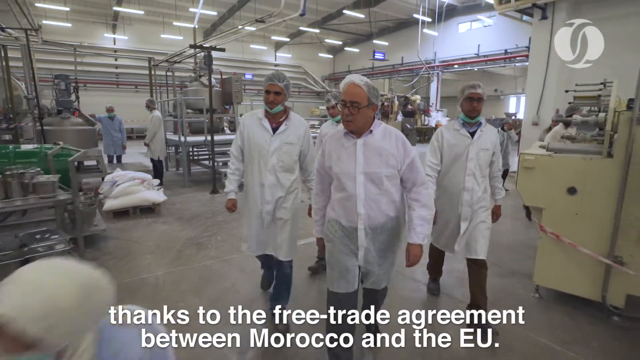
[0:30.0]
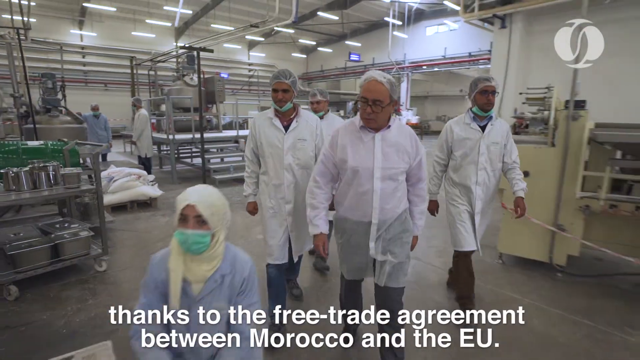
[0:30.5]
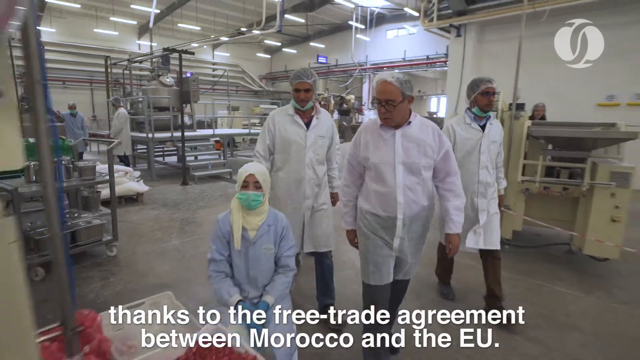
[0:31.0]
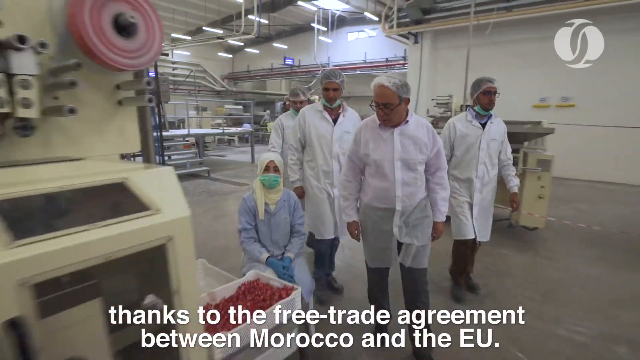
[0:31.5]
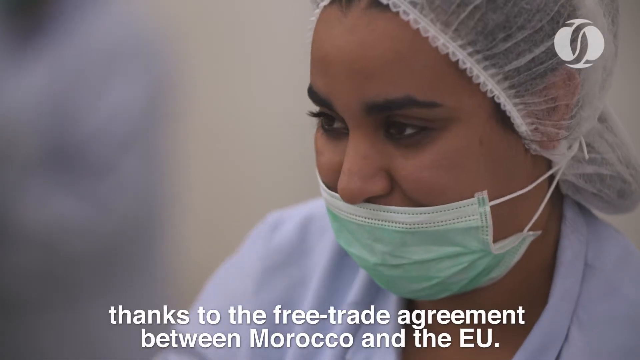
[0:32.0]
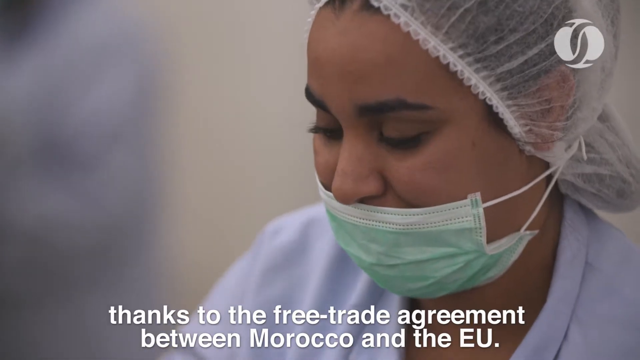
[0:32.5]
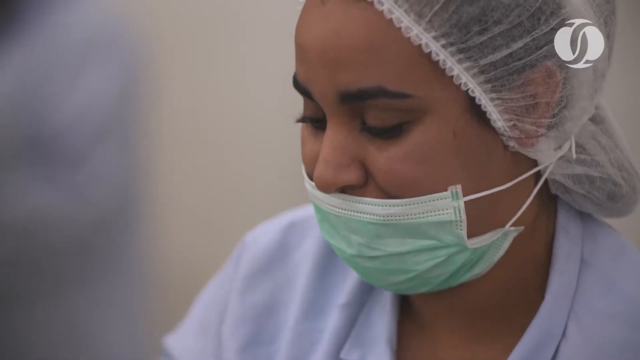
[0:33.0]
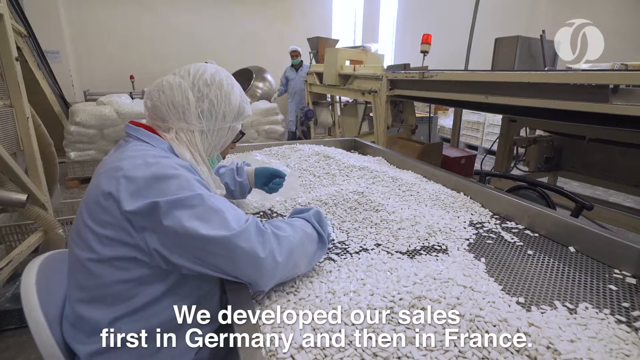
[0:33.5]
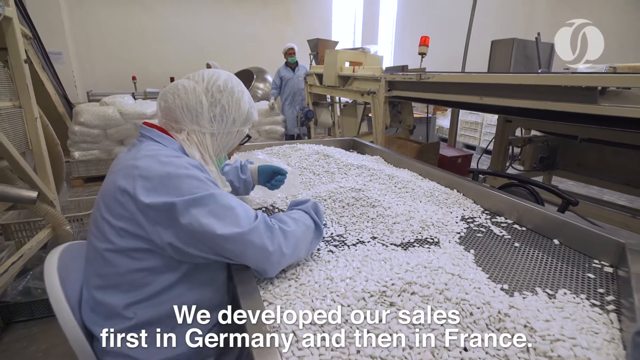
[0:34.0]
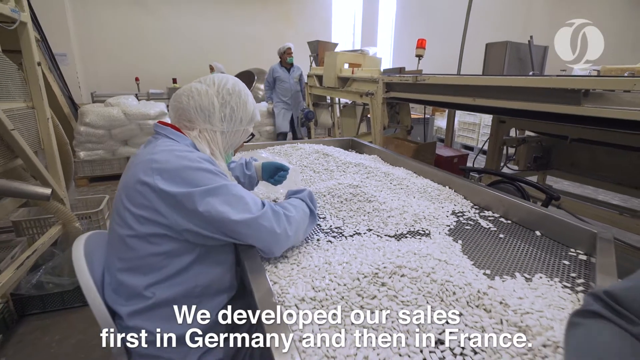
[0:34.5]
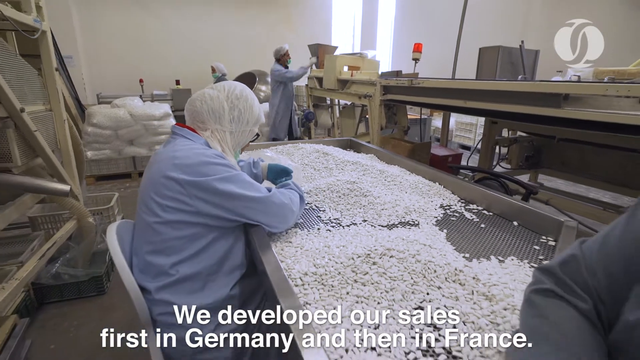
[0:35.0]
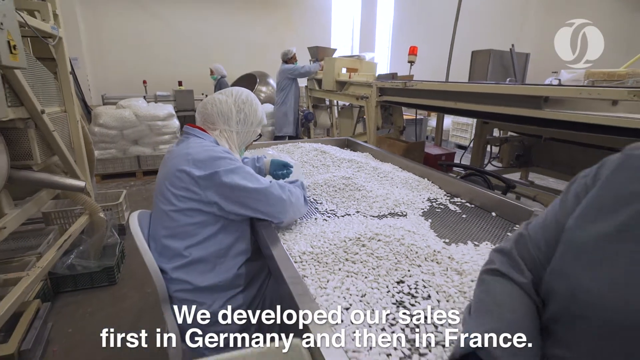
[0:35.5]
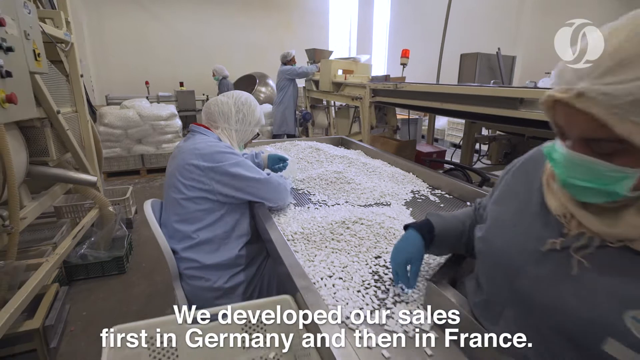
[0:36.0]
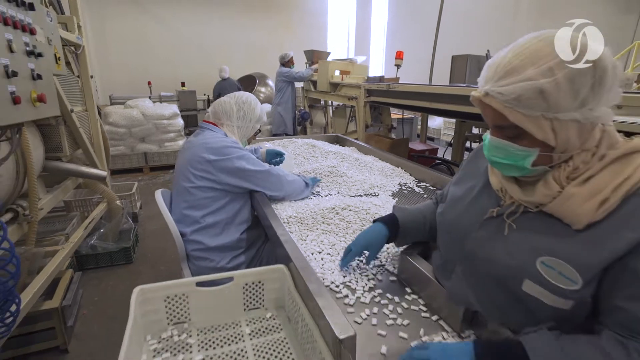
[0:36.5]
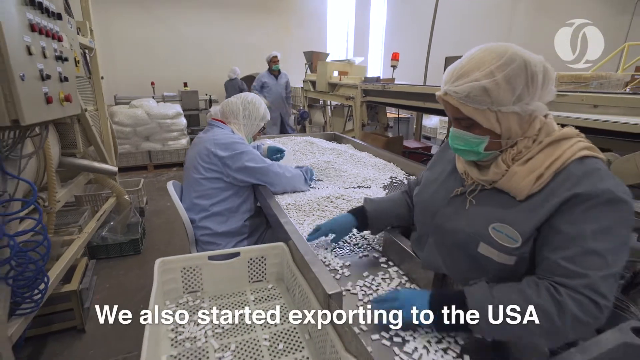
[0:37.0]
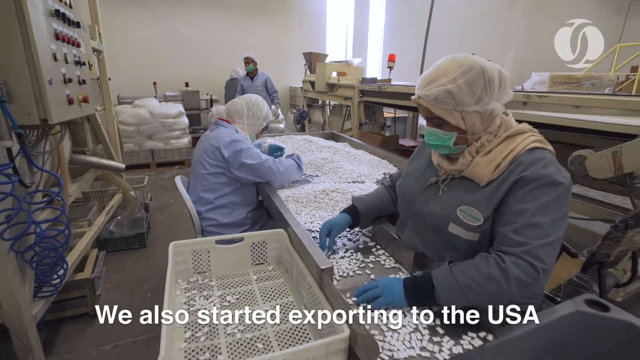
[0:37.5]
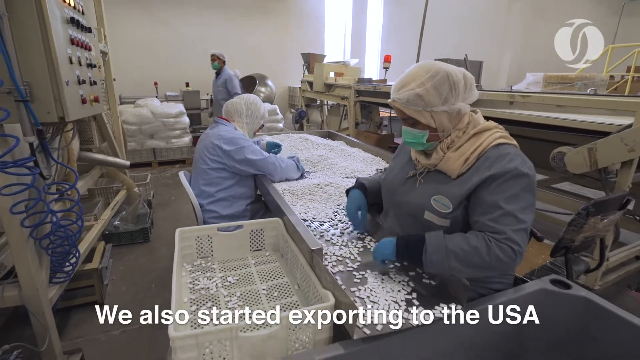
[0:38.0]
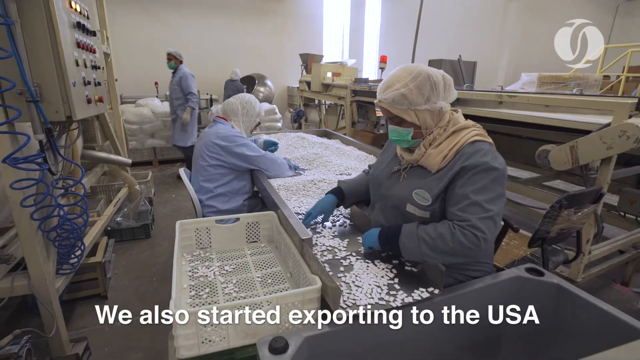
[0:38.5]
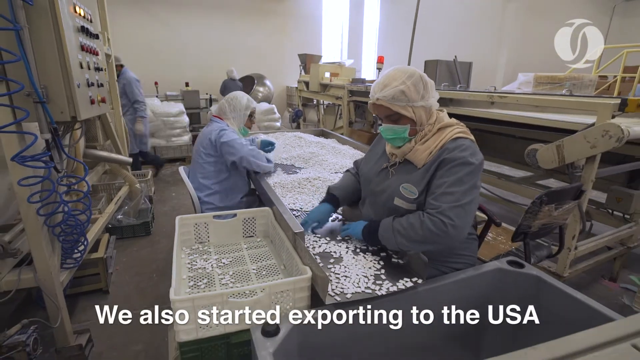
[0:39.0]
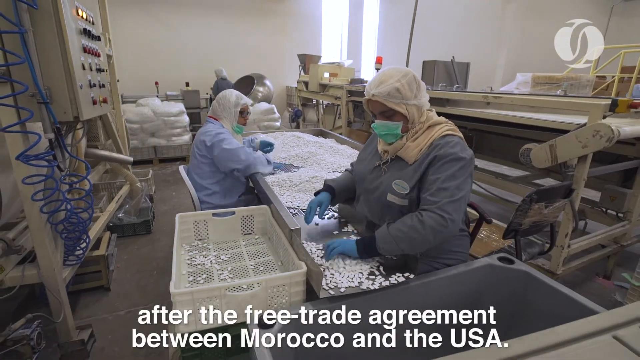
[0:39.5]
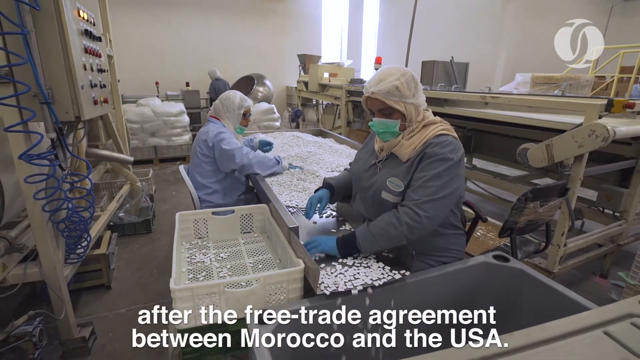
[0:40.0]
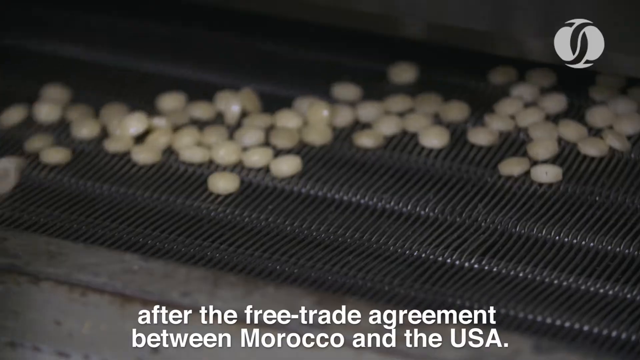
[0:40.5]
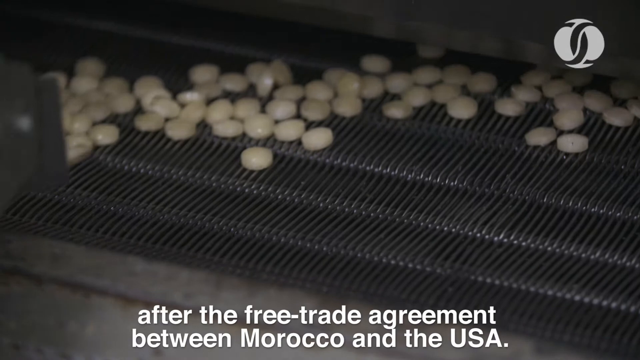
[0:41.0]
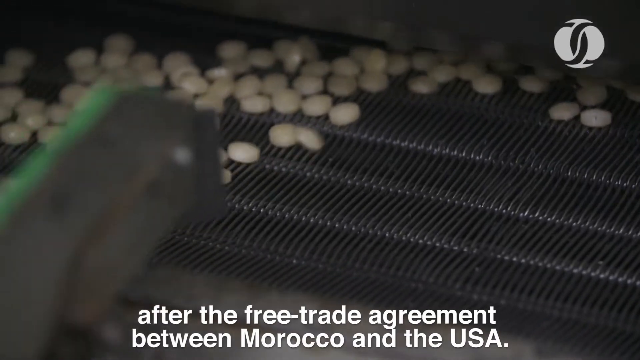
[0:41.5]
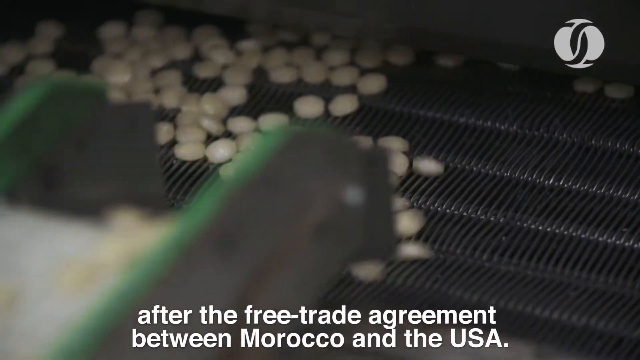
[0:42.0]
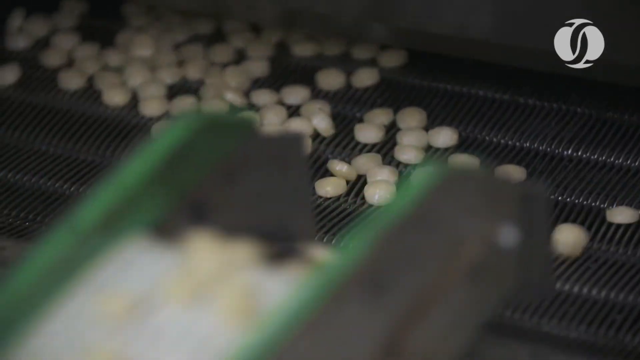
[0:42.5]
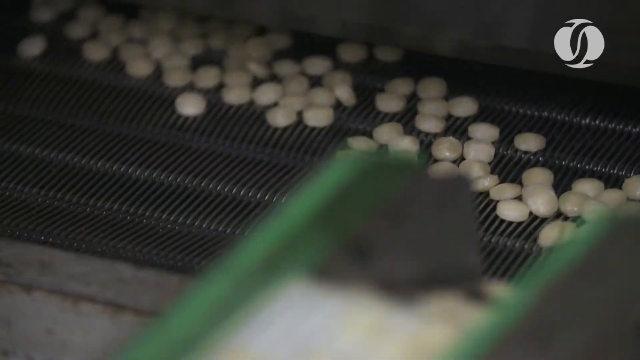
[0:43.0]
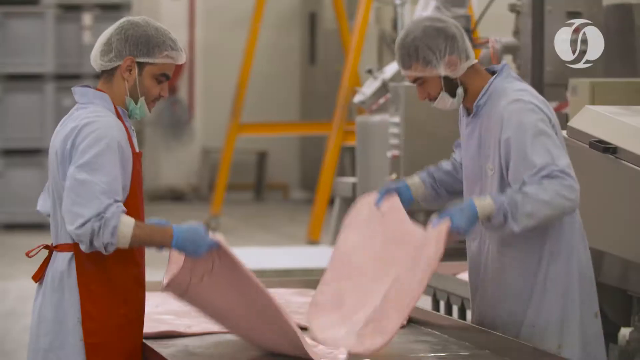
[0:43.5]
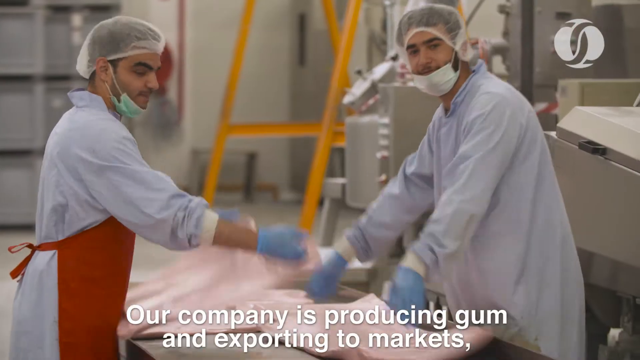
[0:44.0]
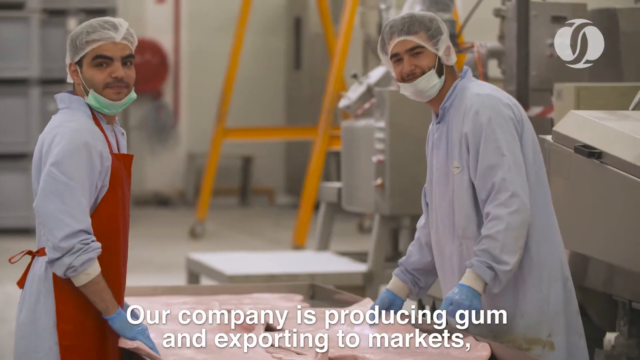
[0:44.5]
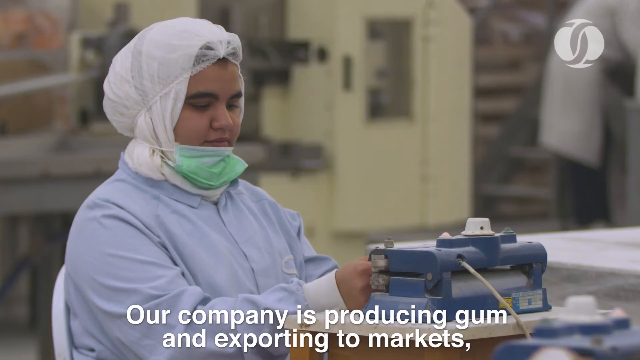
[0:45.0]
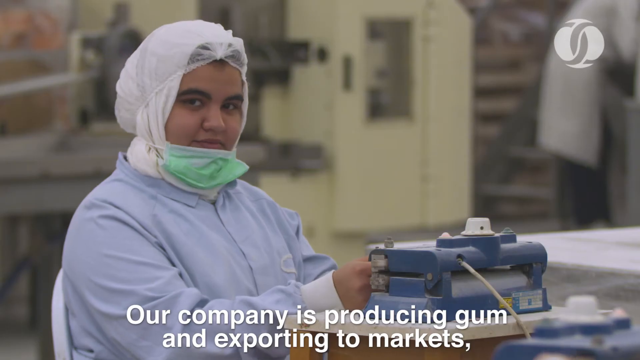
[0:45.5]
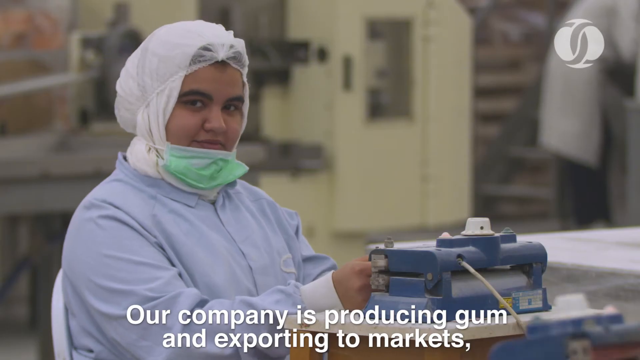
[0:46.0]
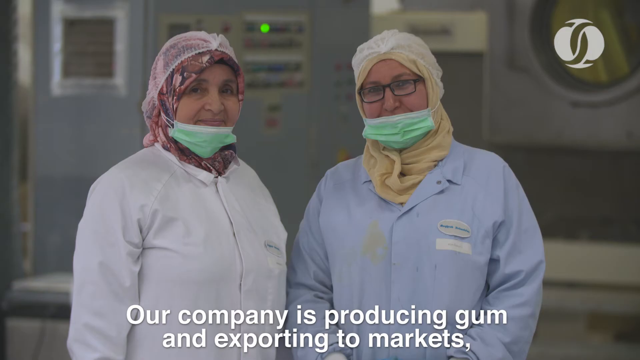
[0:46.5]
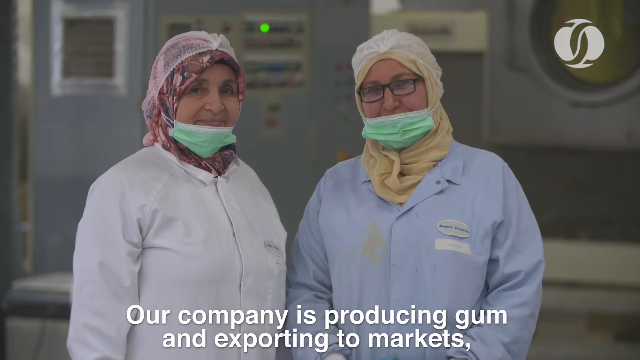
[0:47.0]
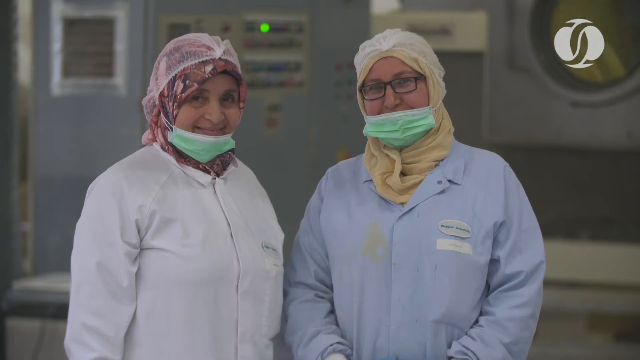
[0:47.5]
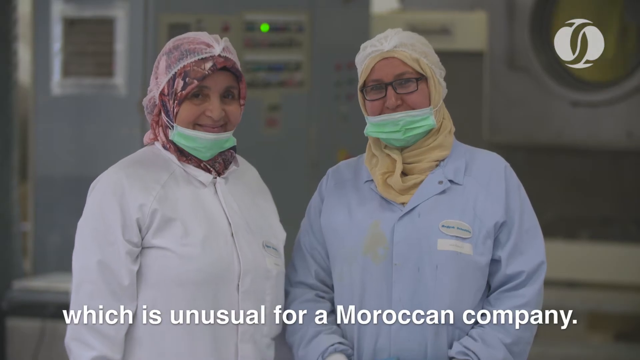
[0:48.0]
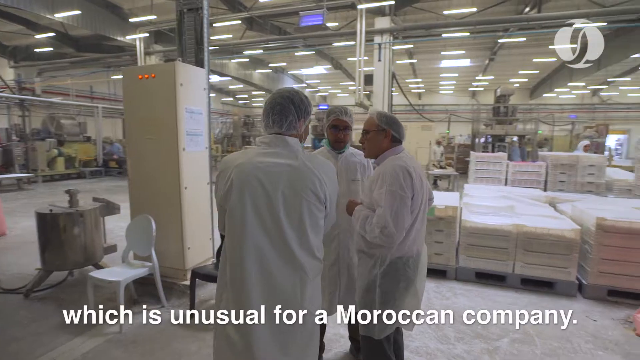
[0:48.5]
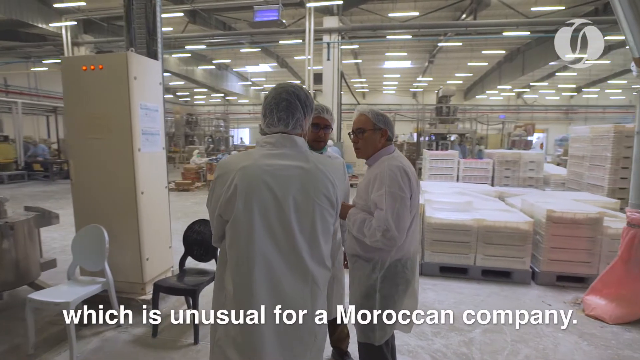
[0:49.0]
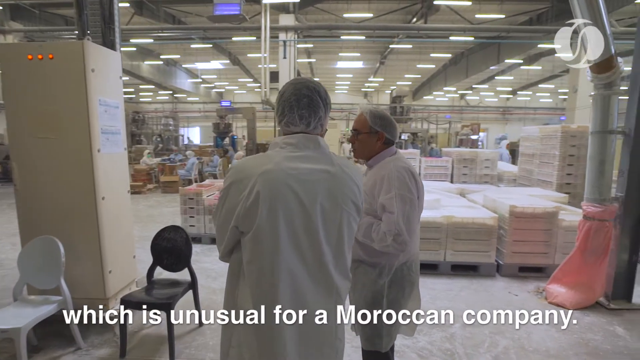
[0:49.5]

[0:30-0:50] Men in white suits and white coats, about four of them, are in a laboratory and walk through the factory where the gum is made. Text reads "thanks to the free trade agreement between Morocco and the EU." People work all around the factory. Further lines appear: "We developed our sales first in Germany and then in France," "We also started exporting to the USA after the free trade agreement between Morocco and the USA," and "Our company is producing gum and exporting to markets, which is unusual for a Moroccan company." Women work with huge amounts of gum, a great many pieces.